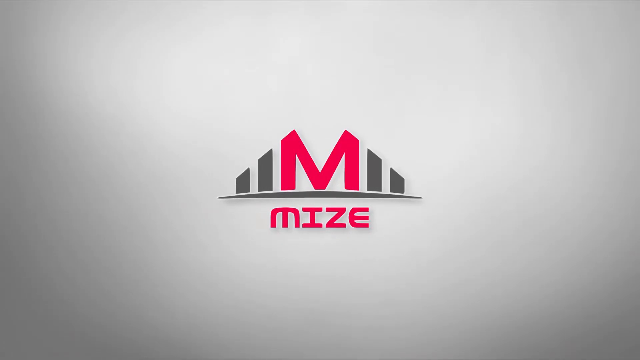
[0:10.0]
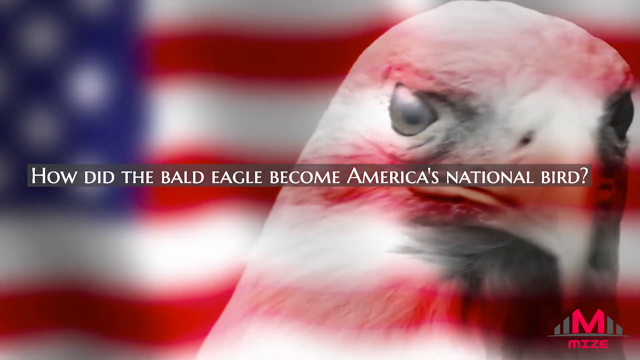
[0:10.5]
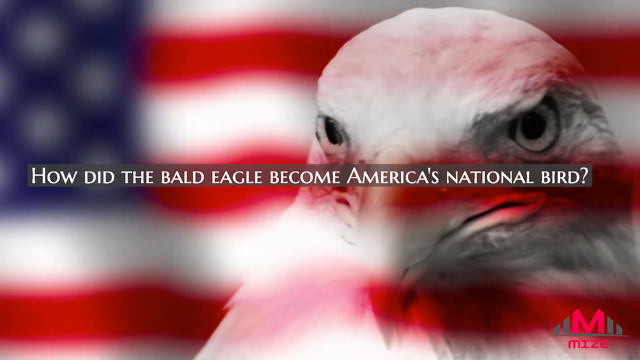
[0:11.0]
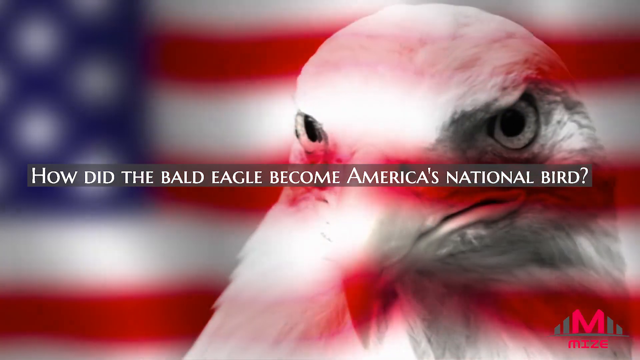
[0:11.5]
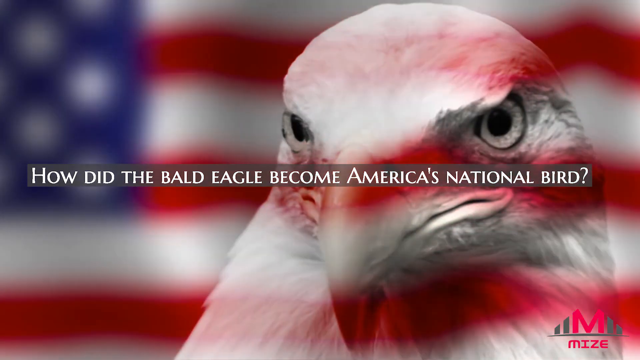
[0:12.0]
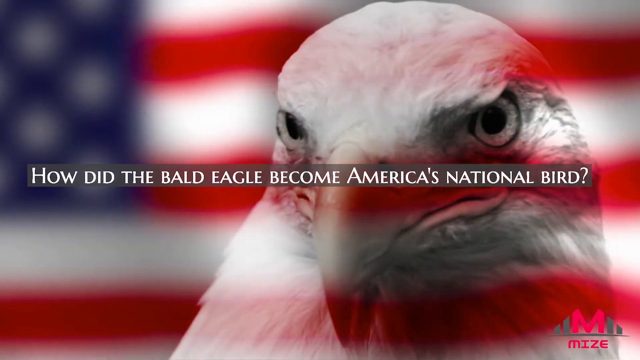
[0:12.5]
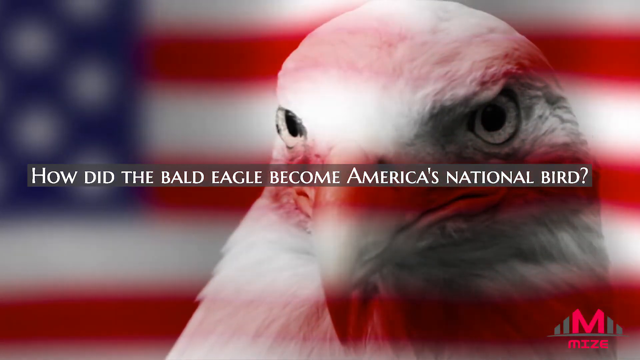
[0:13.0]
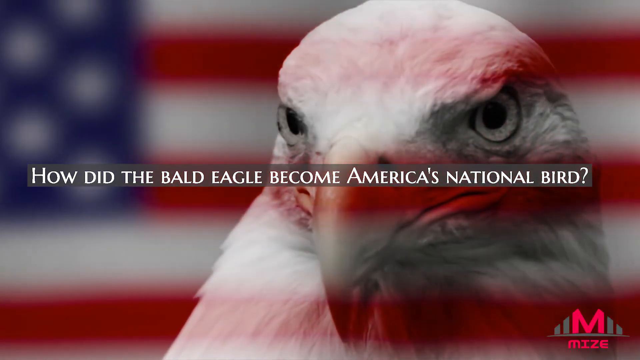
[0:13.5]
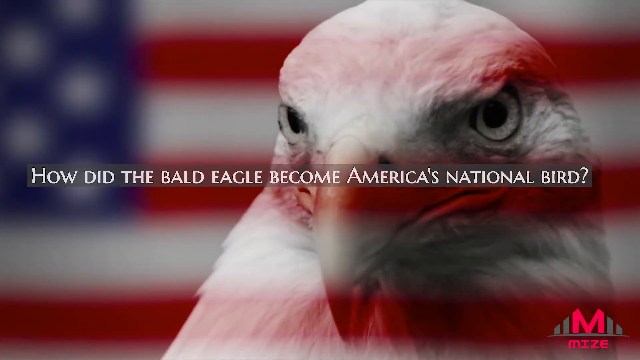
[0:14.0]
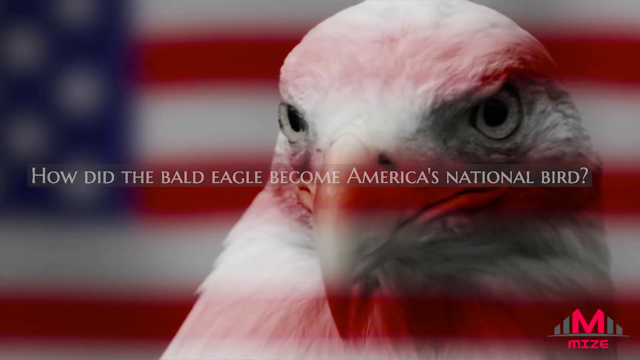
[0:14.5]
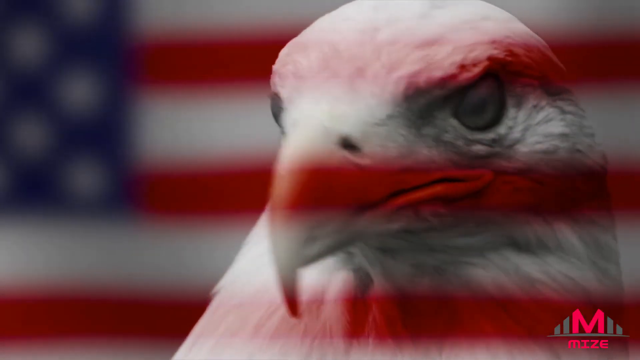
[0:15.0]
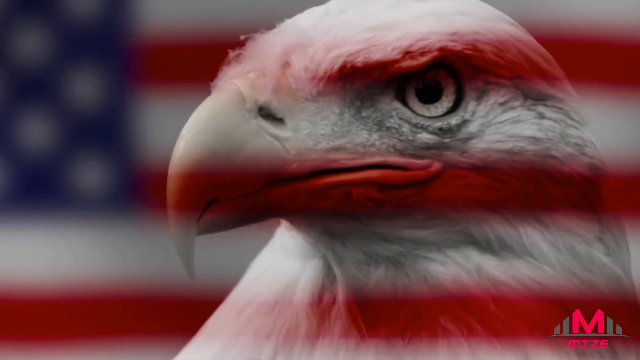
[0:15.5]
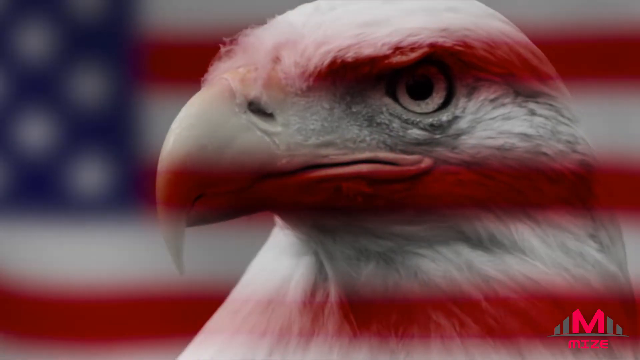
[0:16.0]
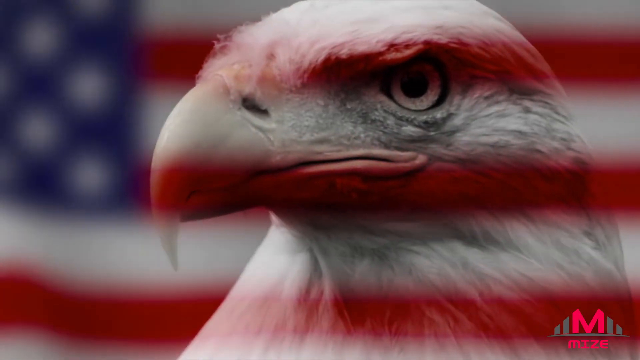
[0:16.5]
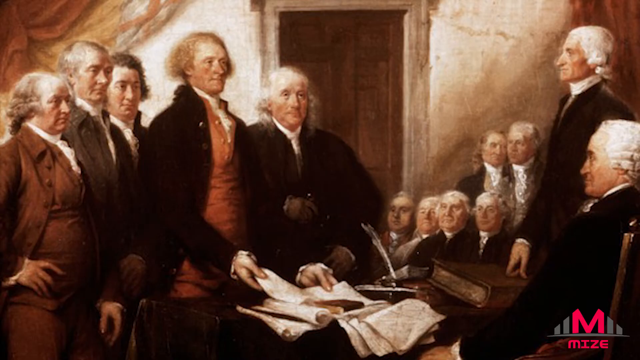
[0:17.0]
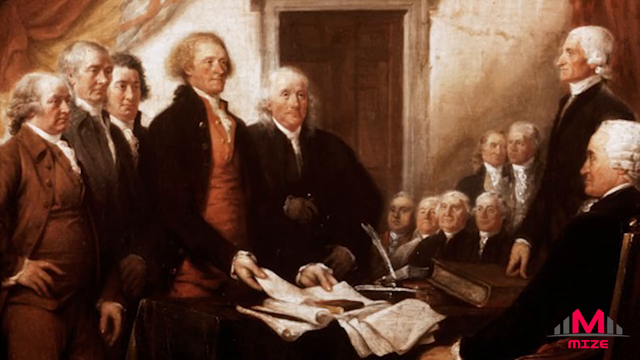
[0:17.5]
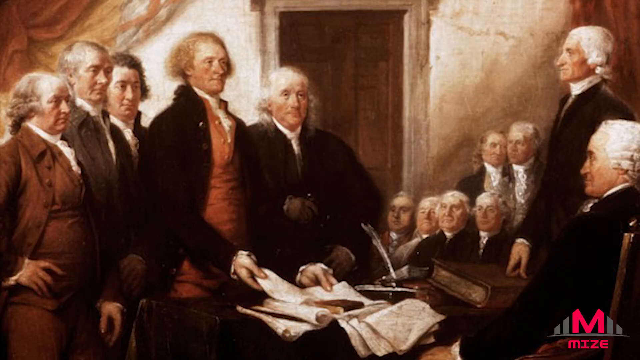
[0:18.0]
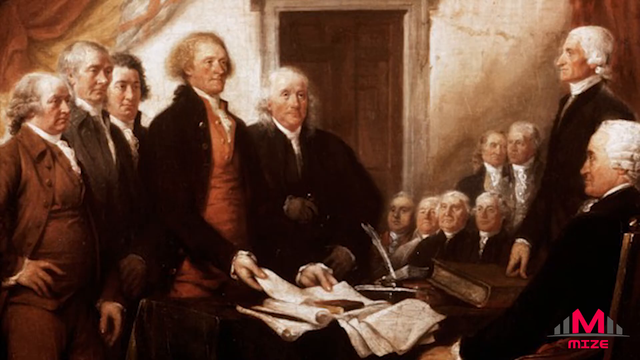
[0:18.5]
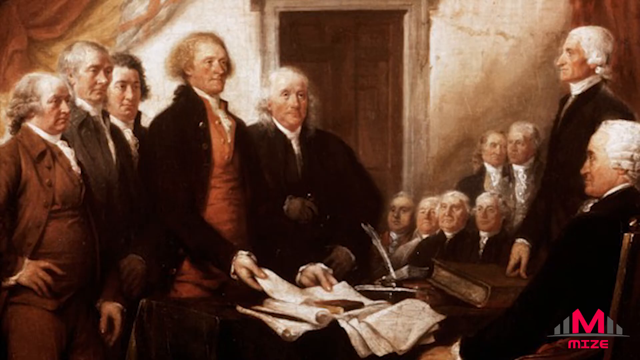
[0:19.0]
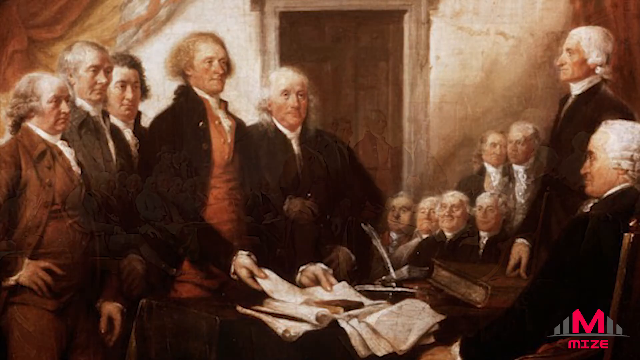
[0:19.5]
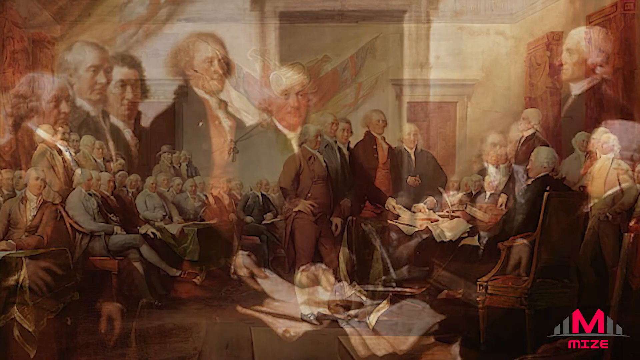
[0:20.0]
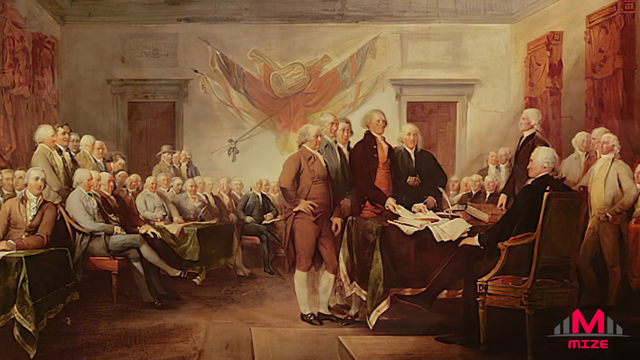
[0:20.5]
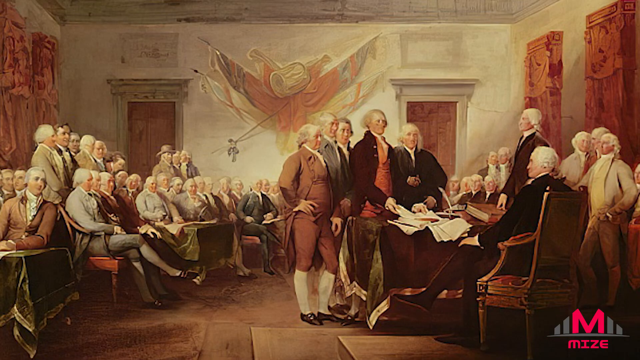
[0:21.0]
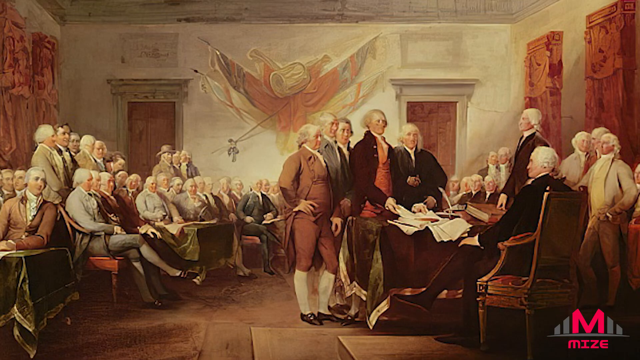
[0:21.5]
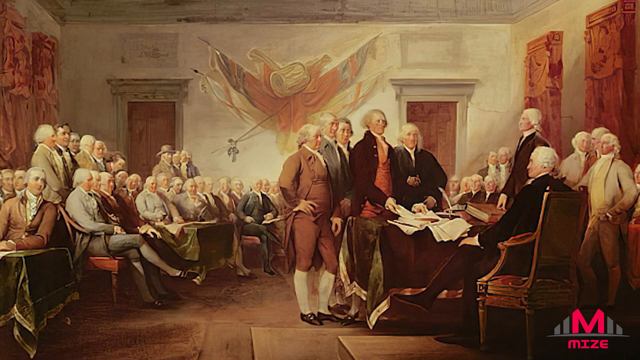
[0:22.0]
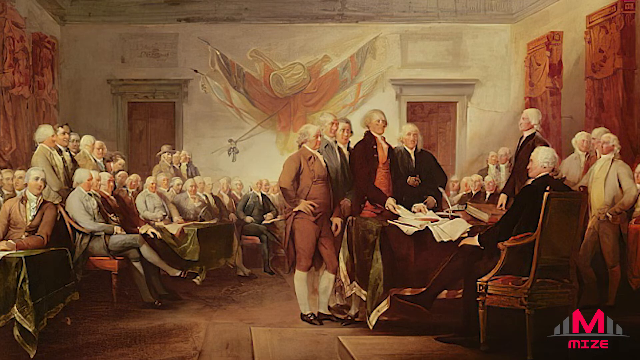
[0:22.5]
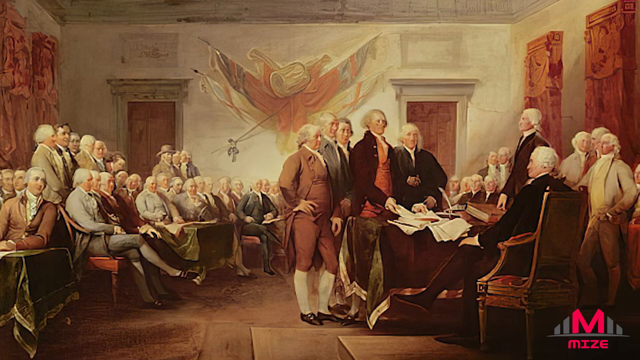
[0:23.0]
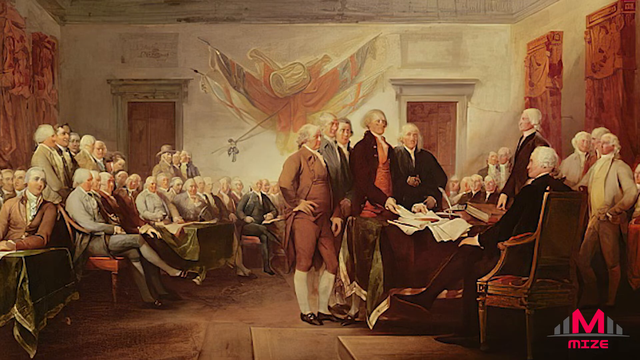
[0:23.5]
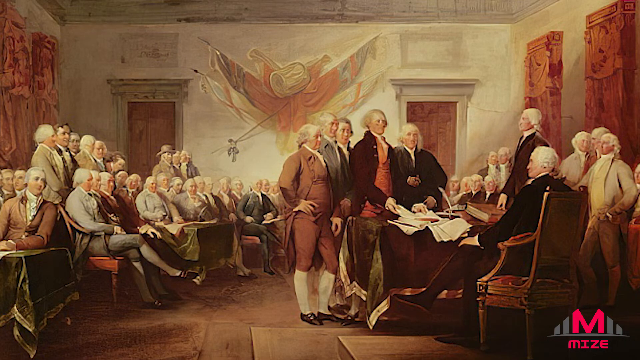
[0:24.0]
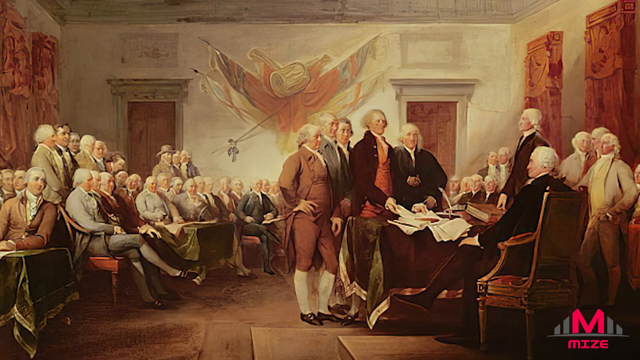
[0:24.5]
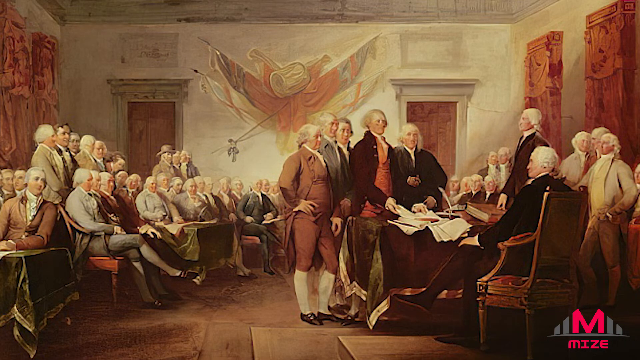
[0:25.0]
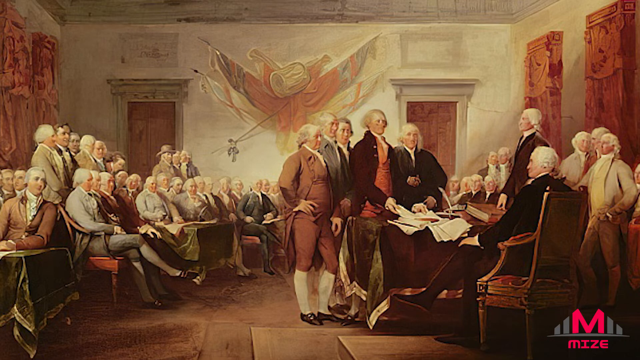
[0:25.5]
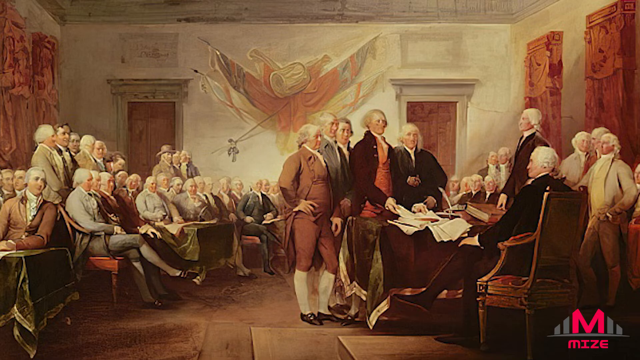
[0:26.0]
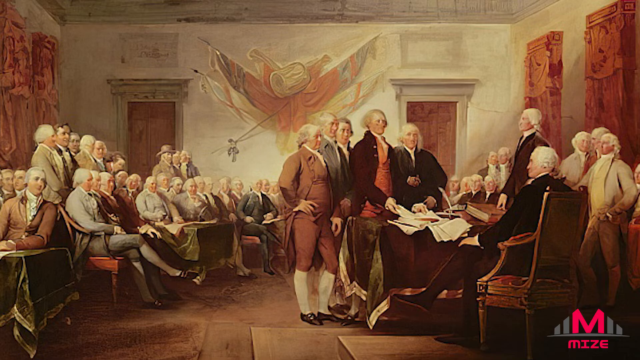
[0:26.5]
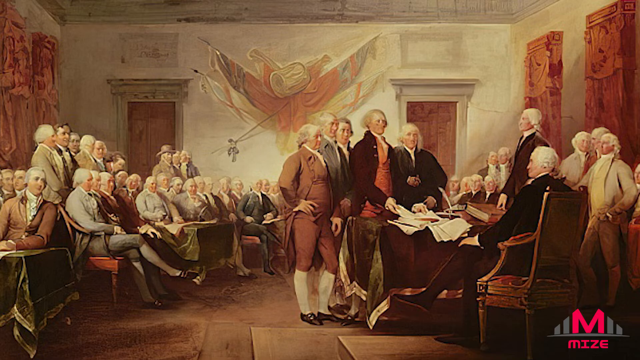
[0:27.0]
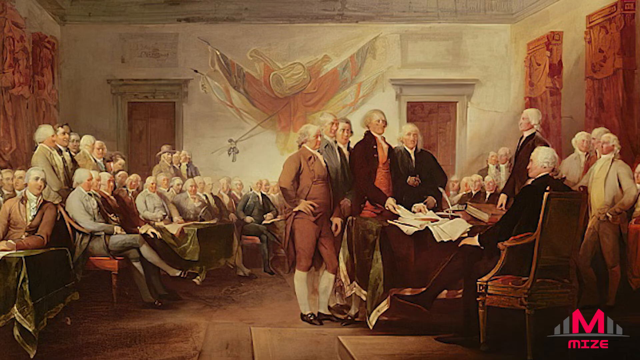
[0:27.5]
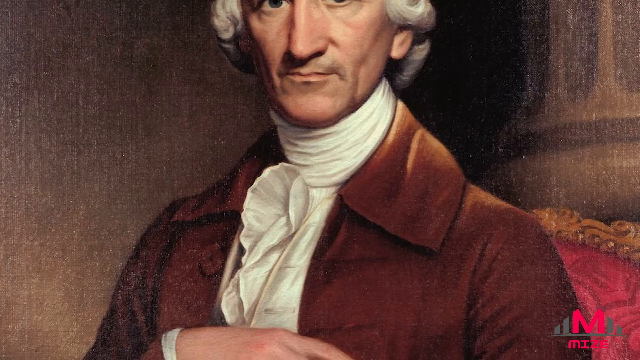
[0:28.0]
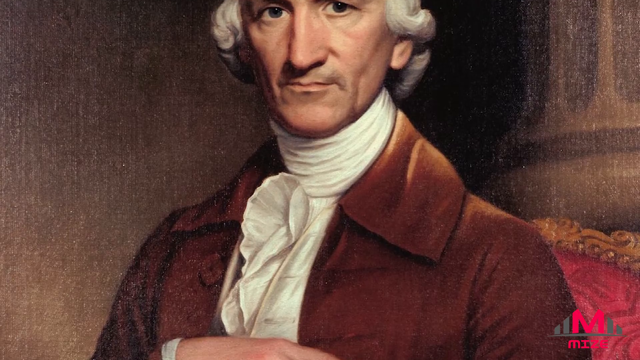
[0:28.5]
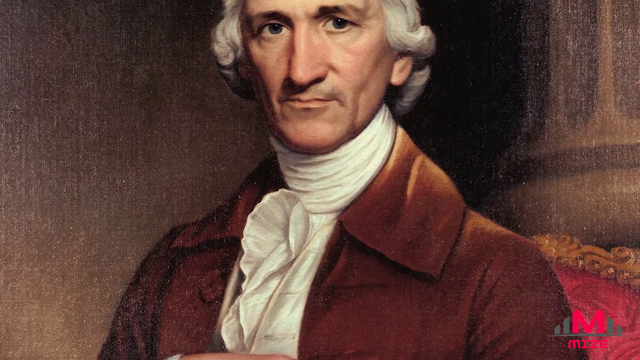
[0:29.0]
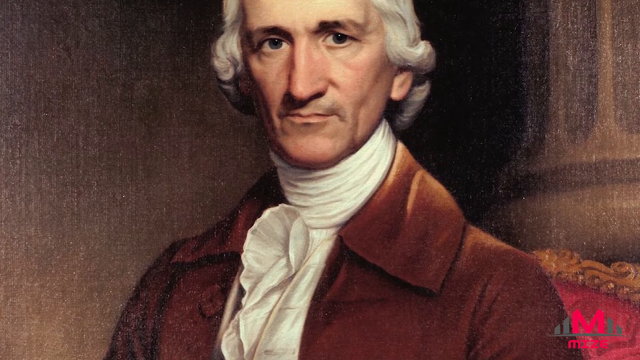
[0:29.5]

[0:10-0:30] A bald eagle appears, along with the question "how did the bald eagle become America's national bird". Next, a group of people is shown: some are showing references and papers while others watch them. Many people are sitting, and some are standing in front of them. They wear traditional suits, boots and other clothing, apparently coats or something similar.